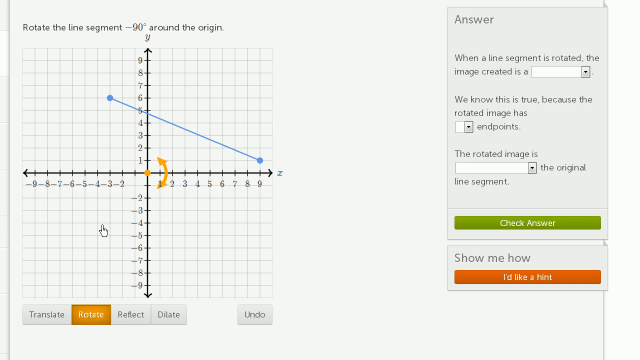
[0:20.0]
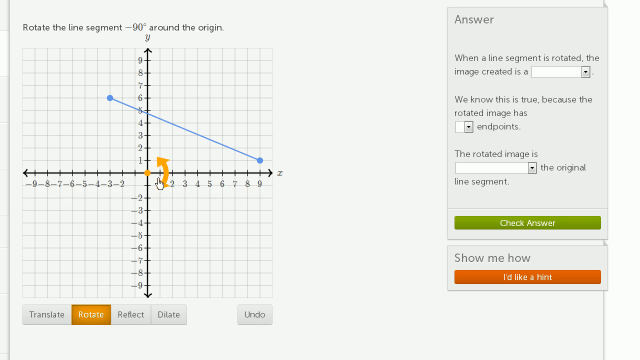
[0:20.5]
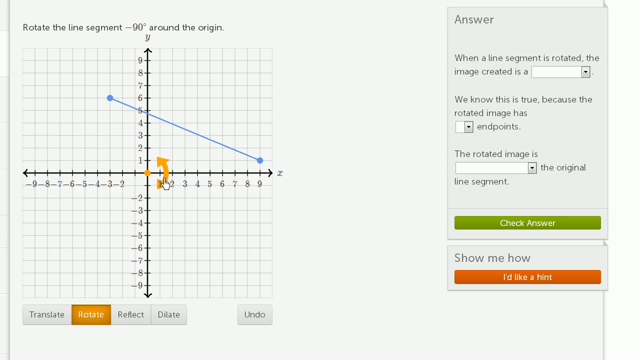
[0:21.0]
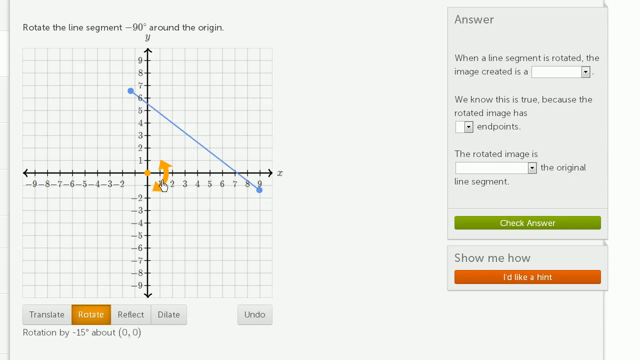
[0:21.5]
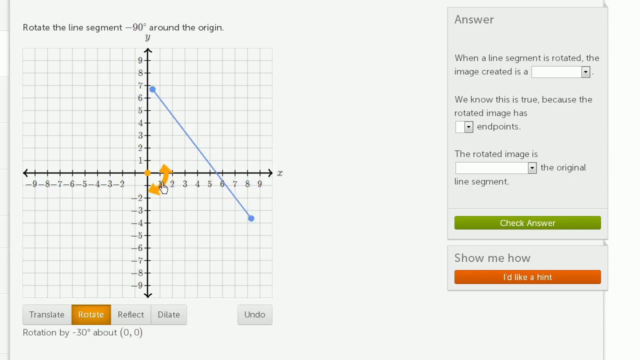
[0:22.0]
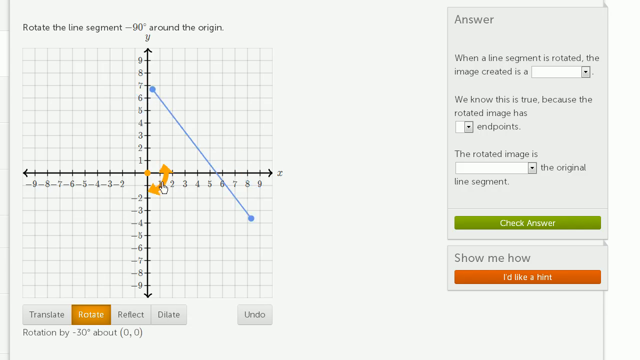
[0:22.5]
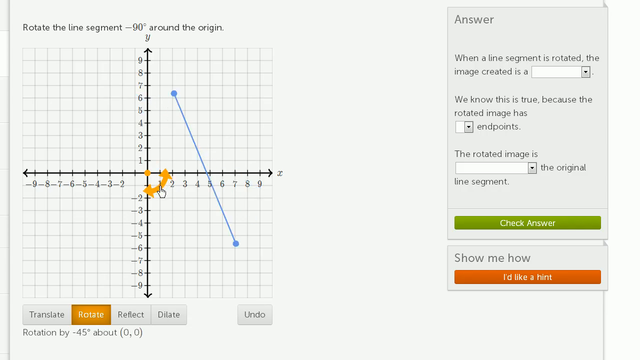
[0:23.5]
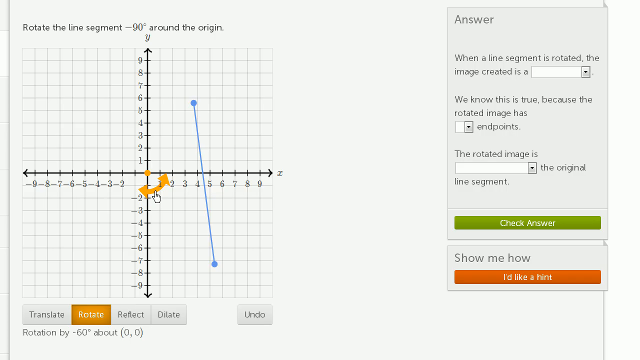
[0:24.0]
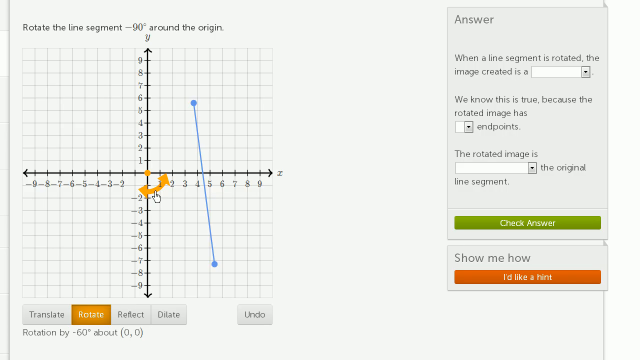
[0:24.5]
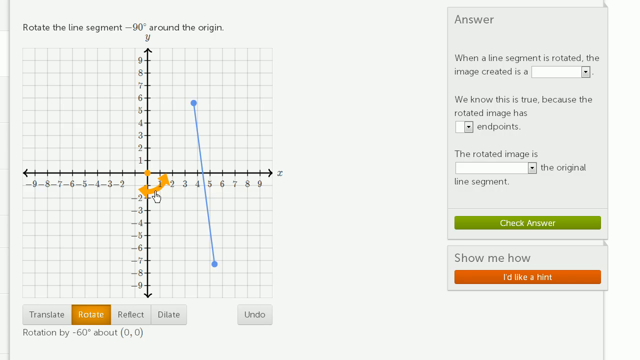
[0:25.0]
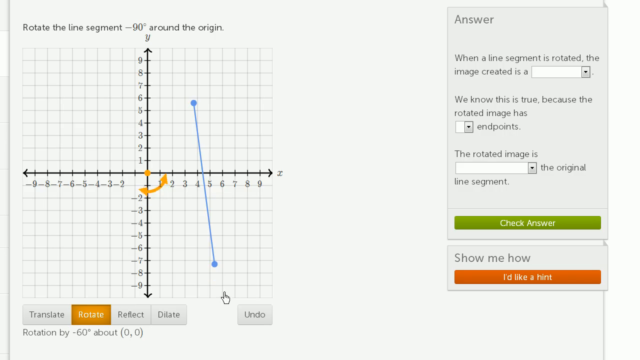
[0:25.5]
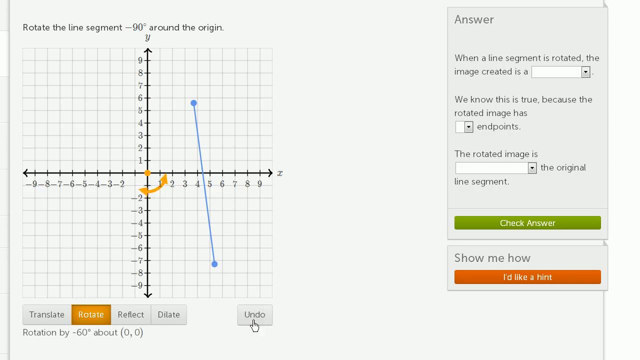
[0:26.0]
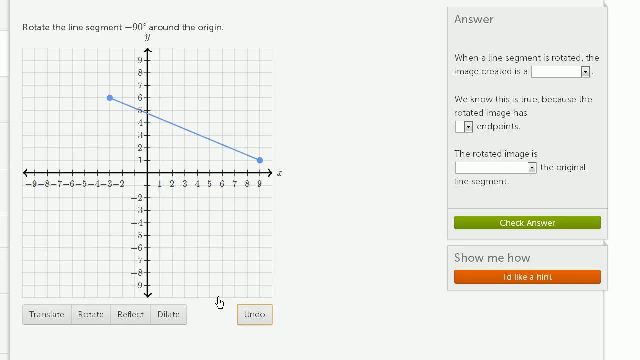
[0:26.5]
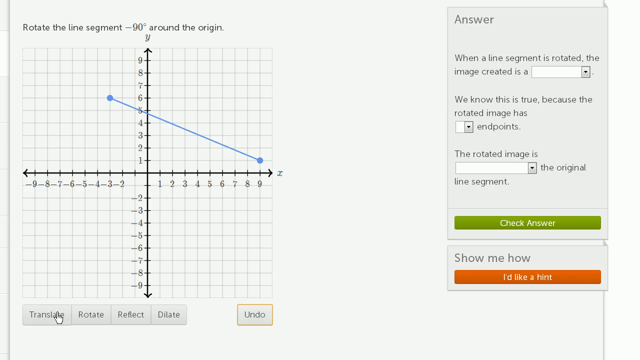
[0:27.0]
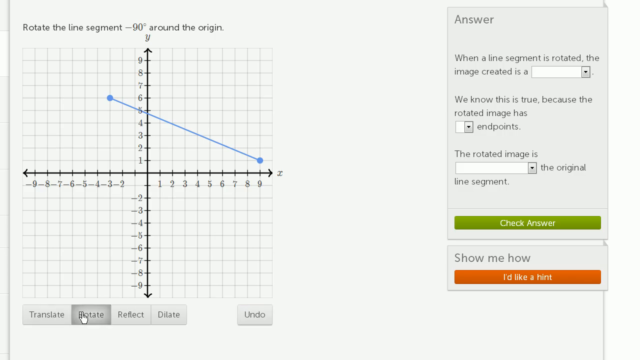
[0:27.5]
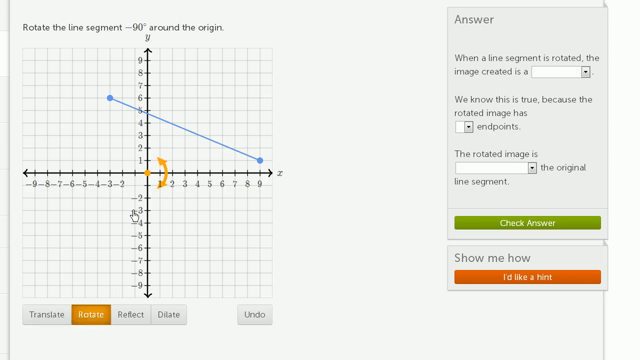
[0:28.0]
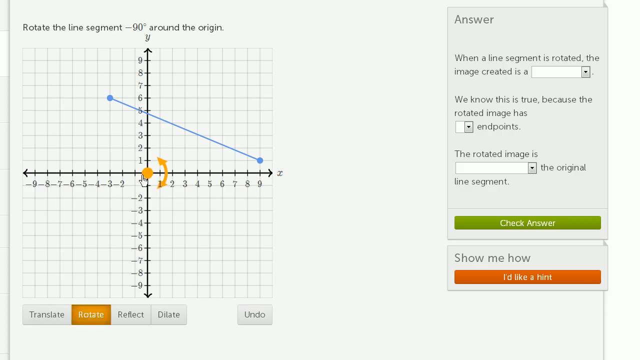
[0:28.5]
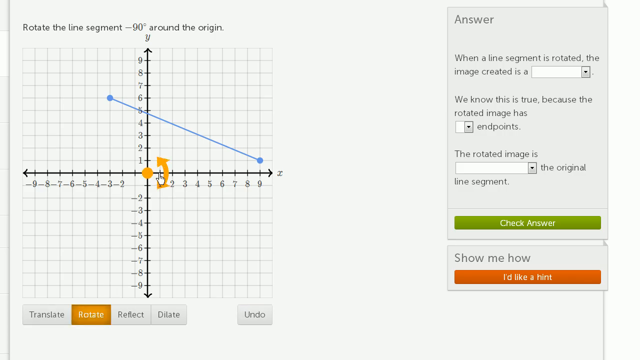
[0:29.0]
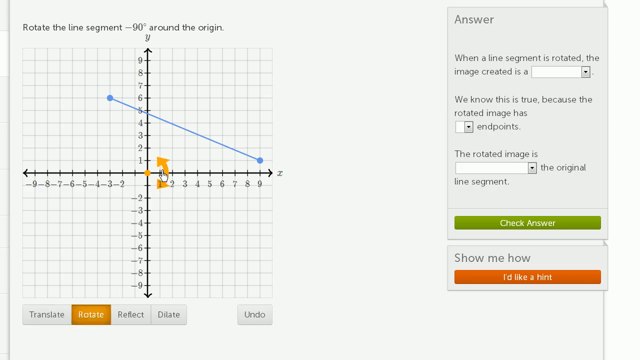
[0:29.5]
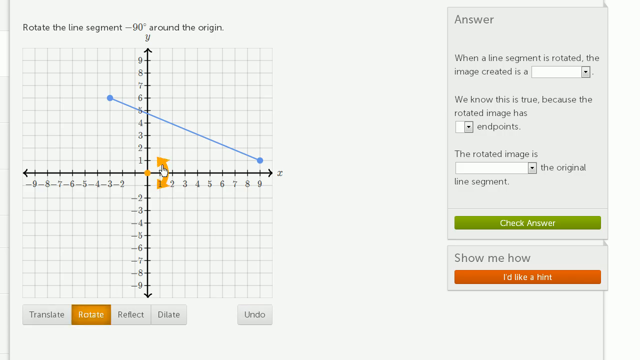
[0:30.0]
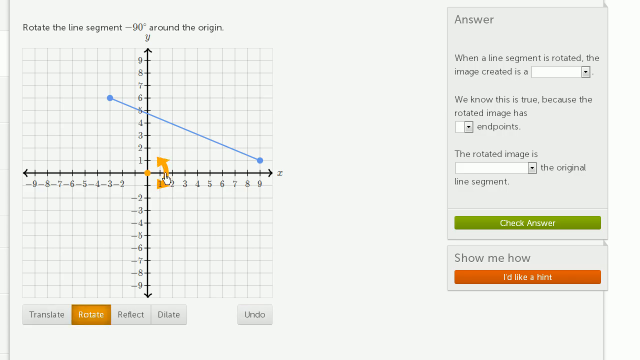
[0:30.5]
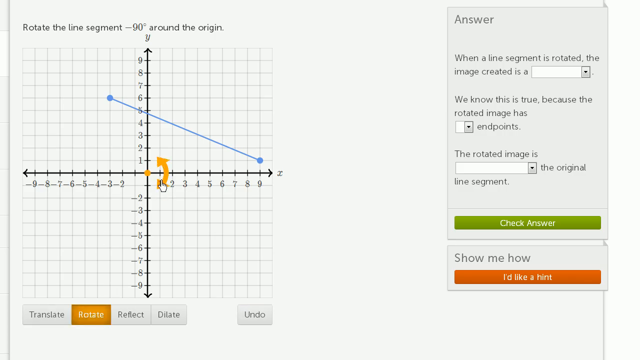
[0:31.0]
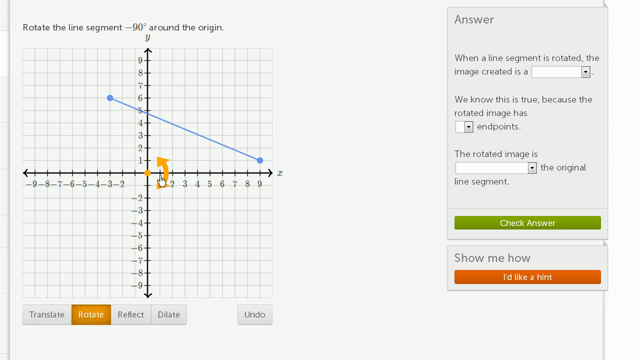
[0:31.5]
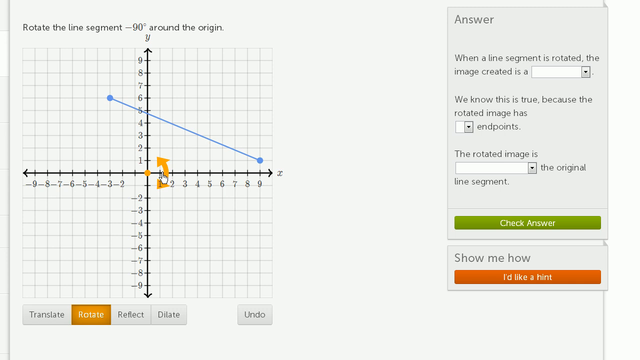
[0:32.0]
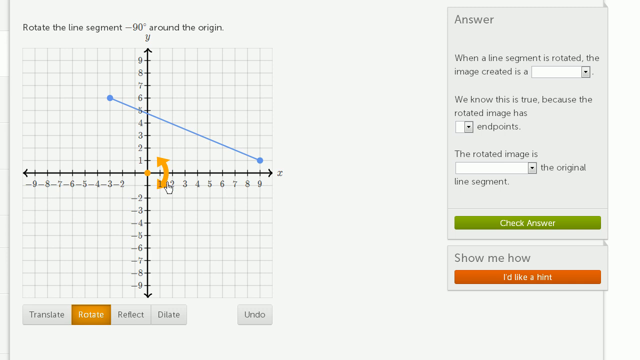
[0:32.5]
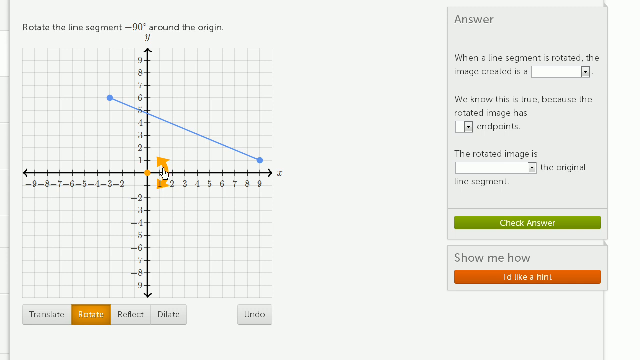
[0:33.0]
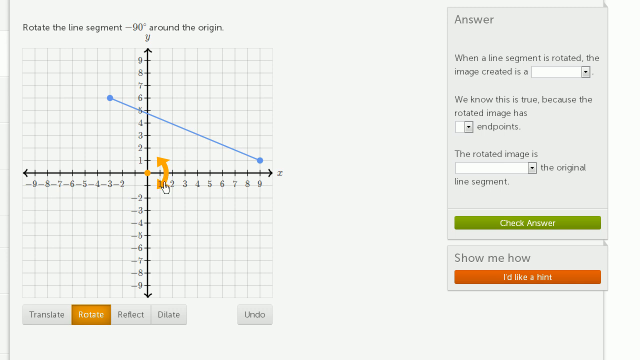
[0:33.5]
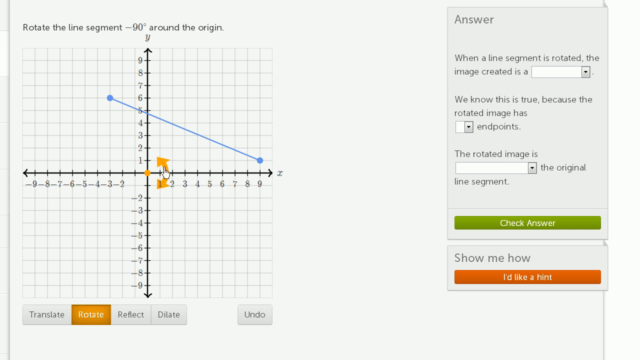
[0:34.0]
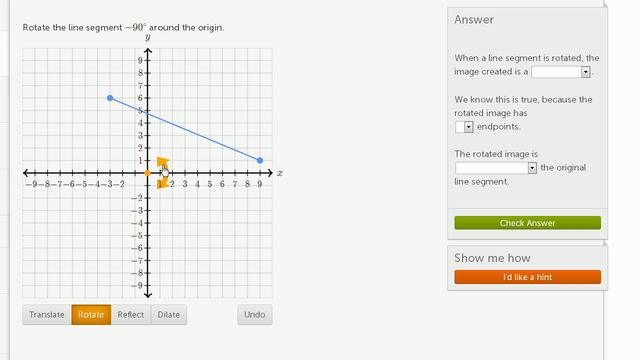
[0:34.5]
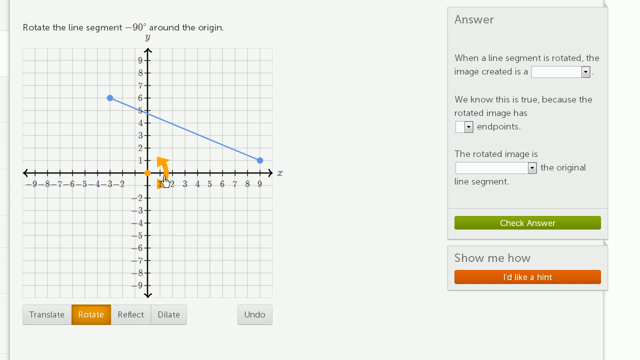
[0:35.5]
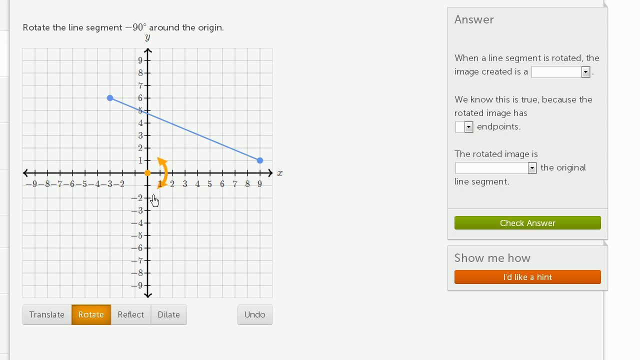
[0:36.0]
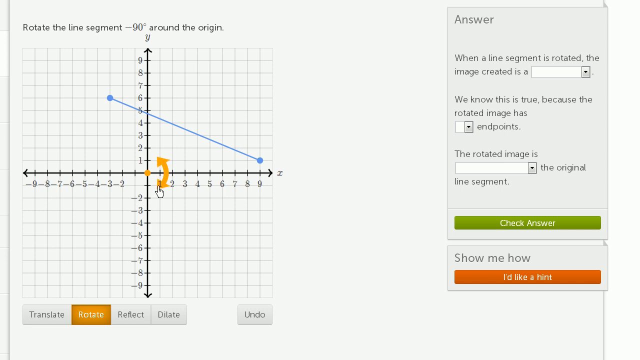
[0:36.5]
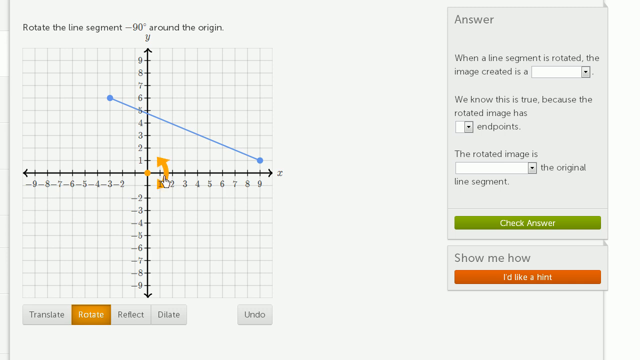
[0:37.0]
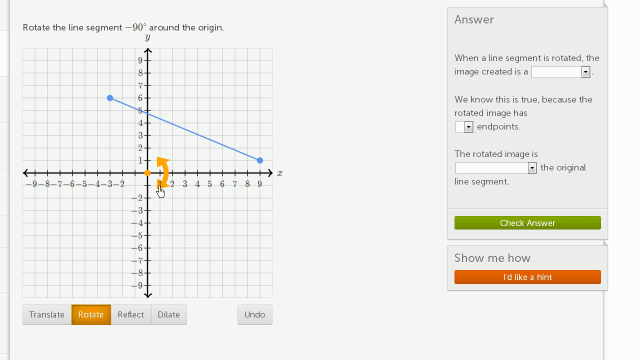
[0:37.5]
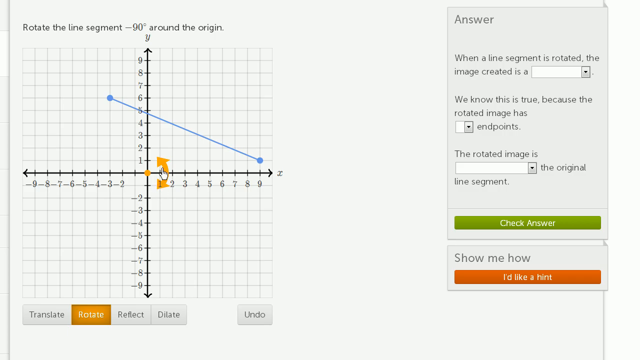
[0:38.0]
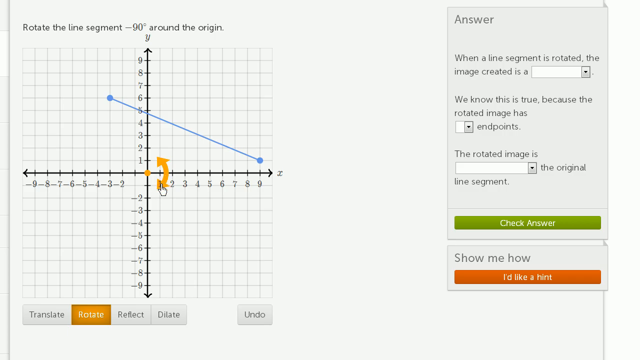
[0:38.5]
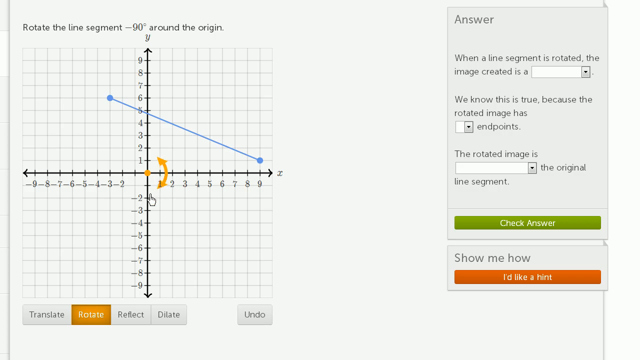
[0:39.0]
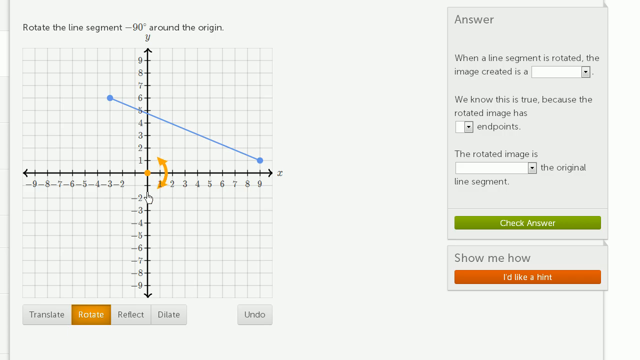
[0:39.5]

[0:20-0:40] The man rotates the line segment using the arrows near the node, but instead of completing the rotation he clicks the undo button. He then repeats the process: he clicks the rotate button, places a dot at the center of the coordinate system, and shows that the line can be rotated using the two arrows, without actually rotating it yet. The task "rotate the line segment minus 90 degree around the origin" is visible, along with the answer table and "show me how."